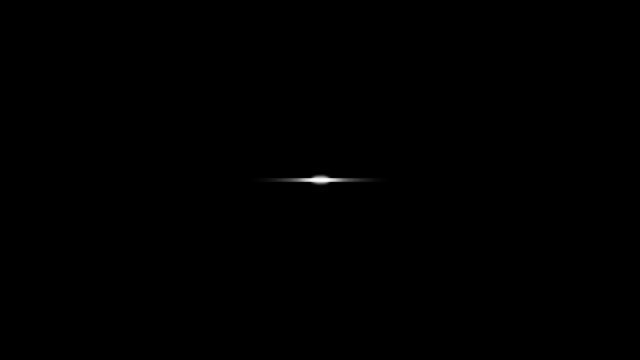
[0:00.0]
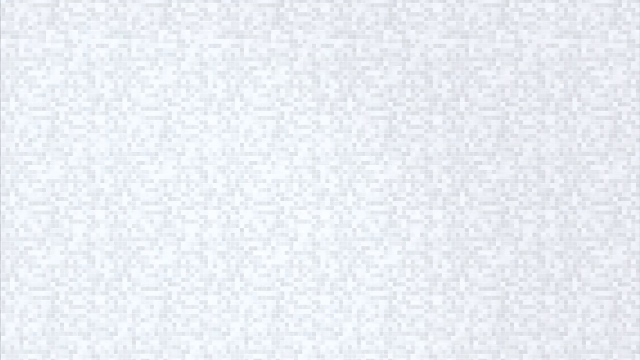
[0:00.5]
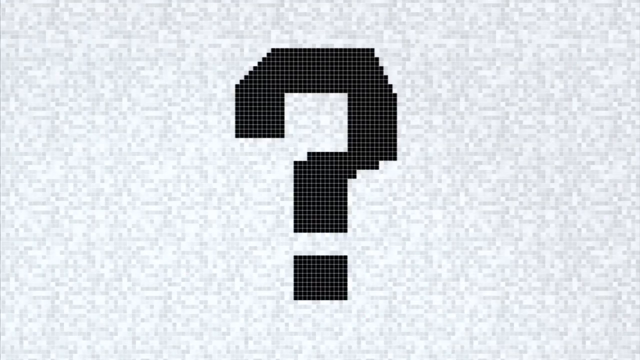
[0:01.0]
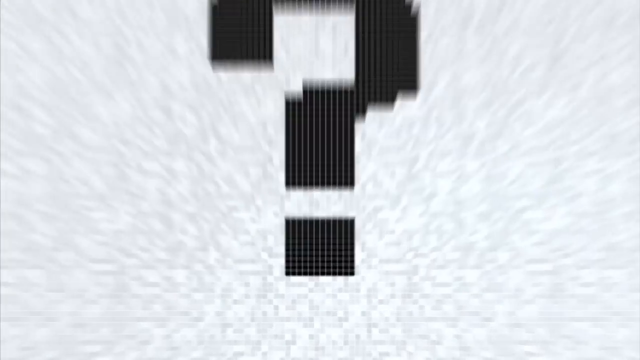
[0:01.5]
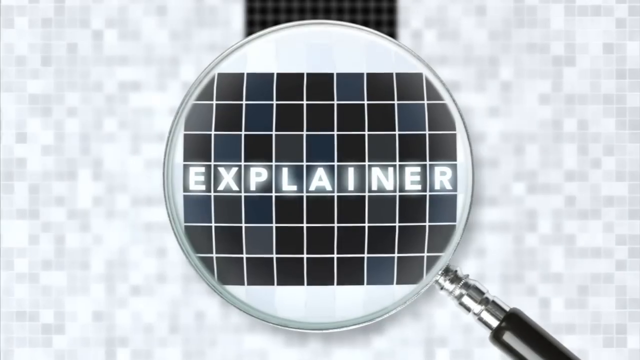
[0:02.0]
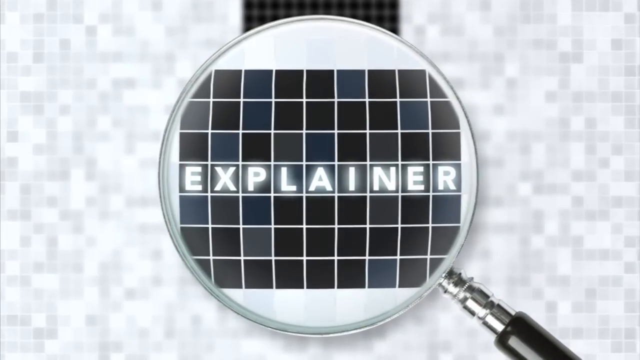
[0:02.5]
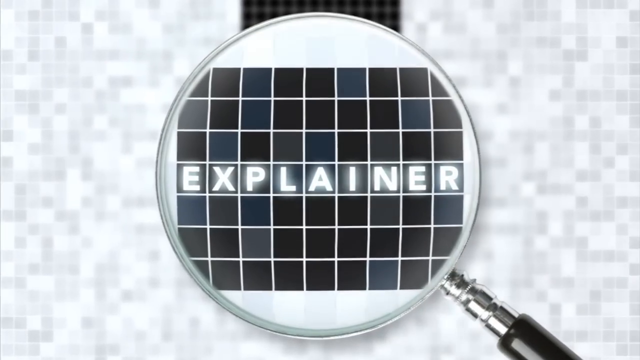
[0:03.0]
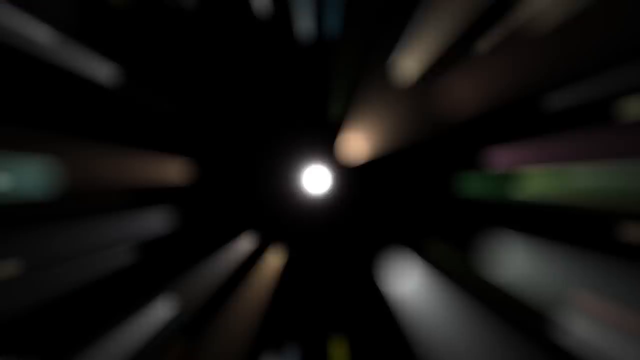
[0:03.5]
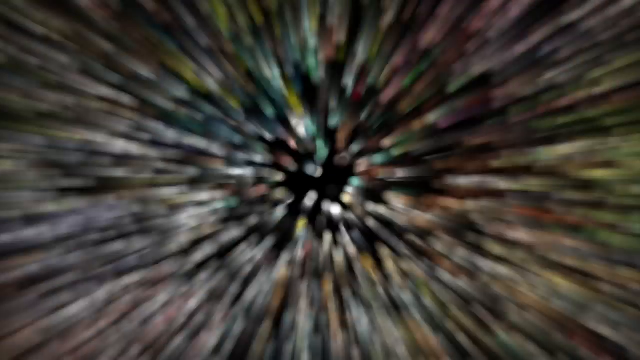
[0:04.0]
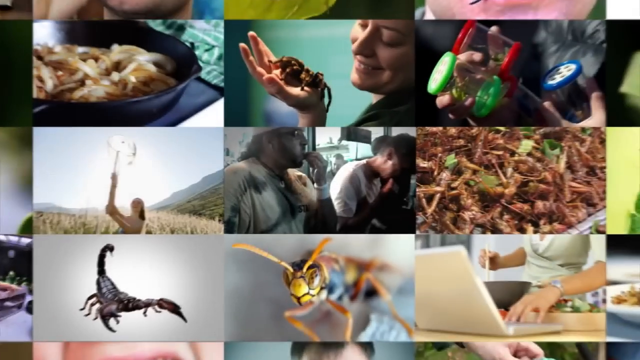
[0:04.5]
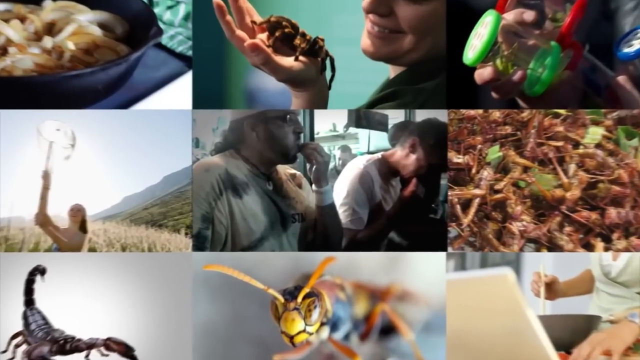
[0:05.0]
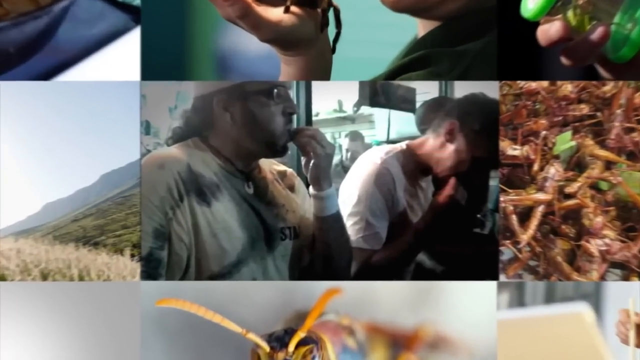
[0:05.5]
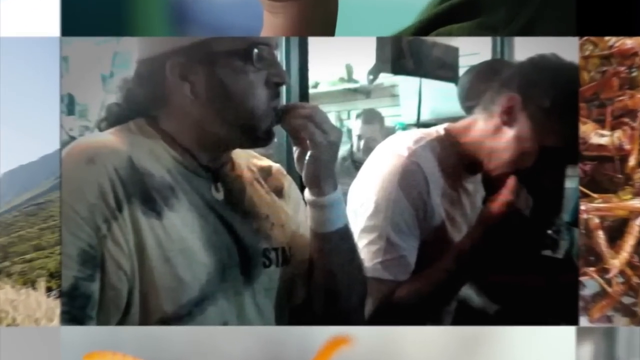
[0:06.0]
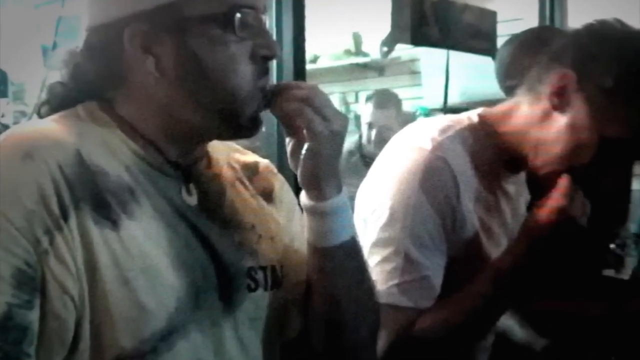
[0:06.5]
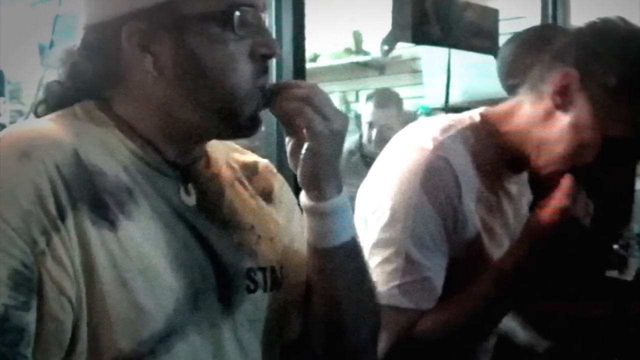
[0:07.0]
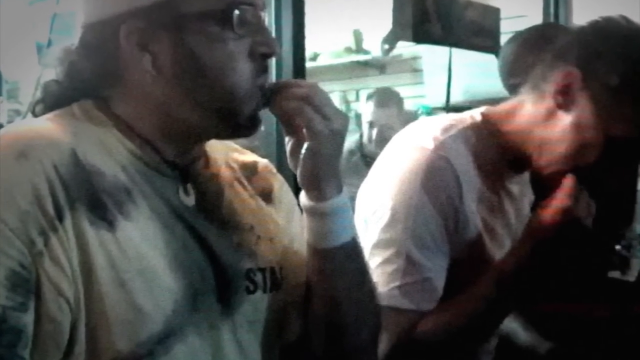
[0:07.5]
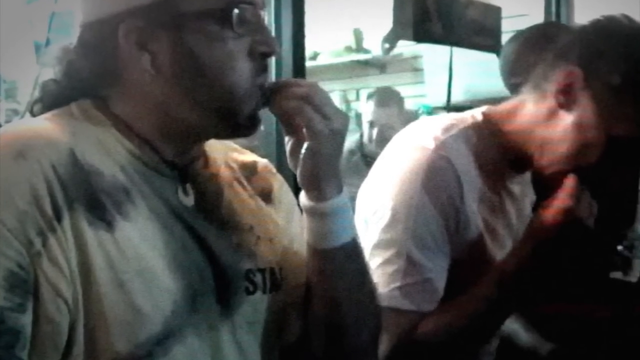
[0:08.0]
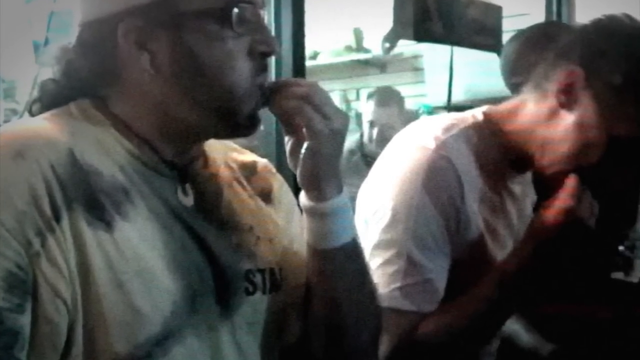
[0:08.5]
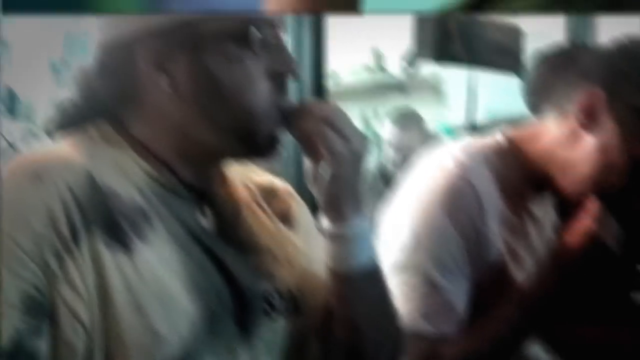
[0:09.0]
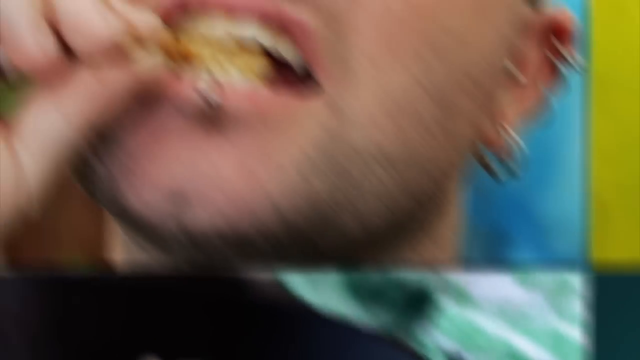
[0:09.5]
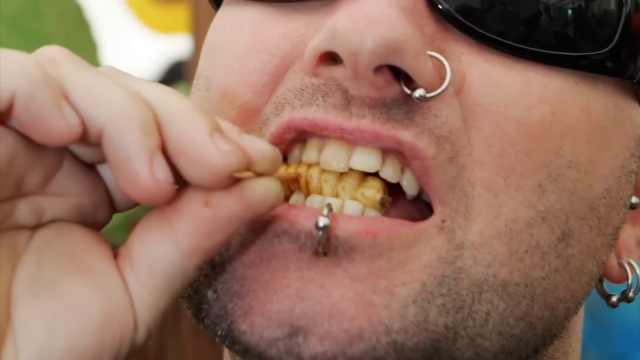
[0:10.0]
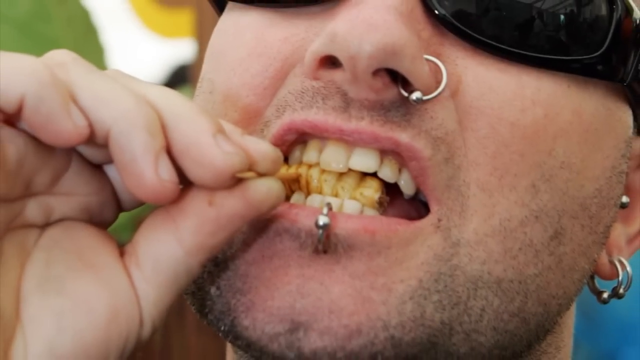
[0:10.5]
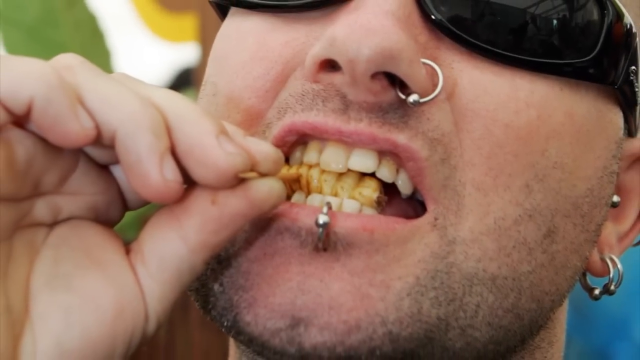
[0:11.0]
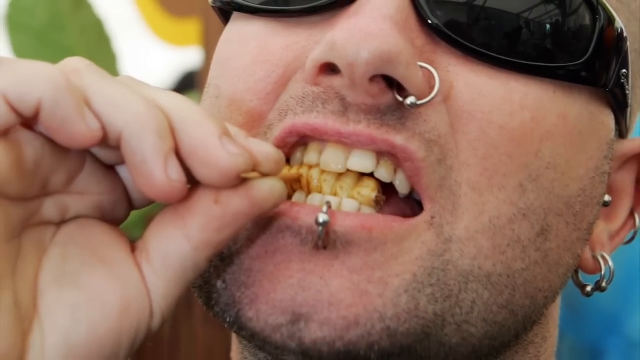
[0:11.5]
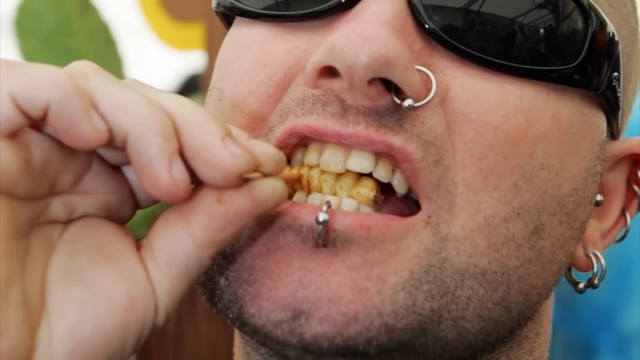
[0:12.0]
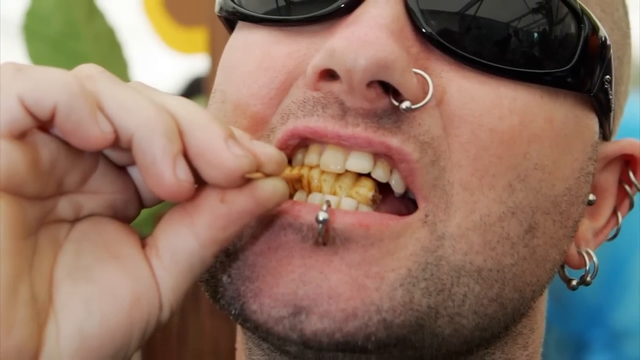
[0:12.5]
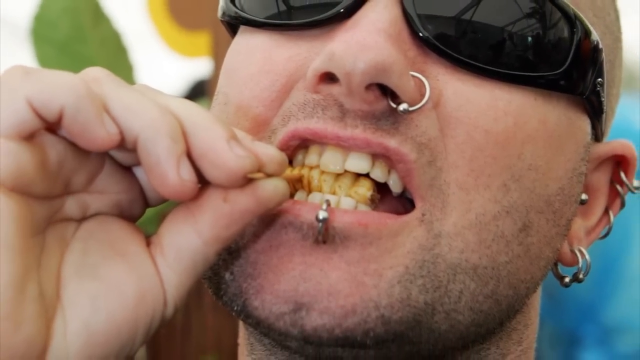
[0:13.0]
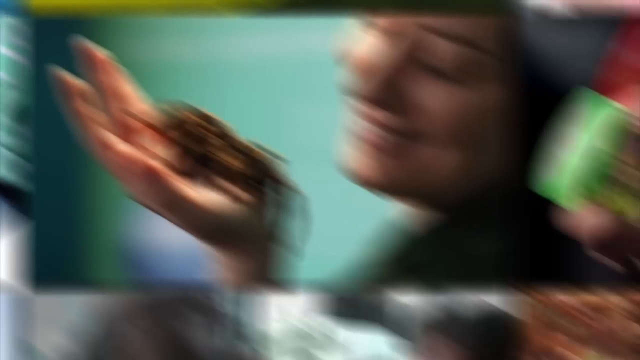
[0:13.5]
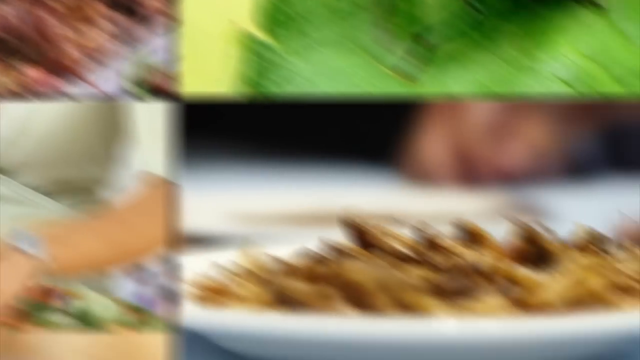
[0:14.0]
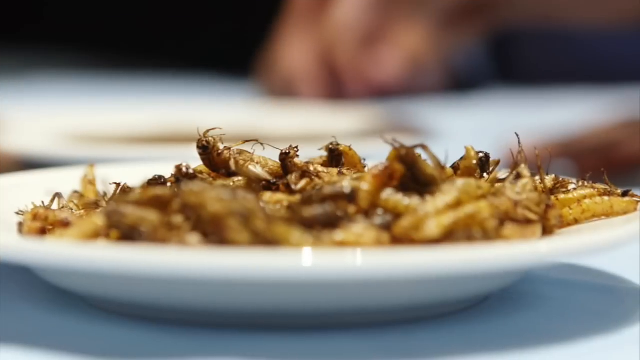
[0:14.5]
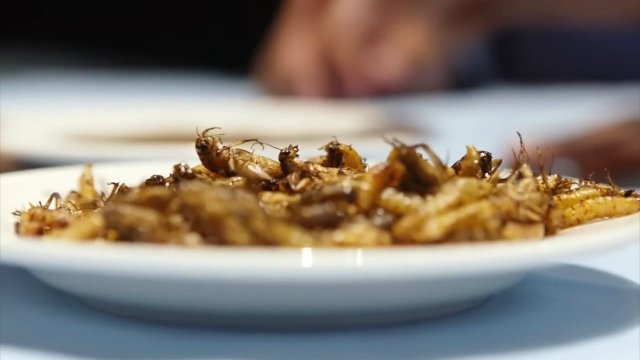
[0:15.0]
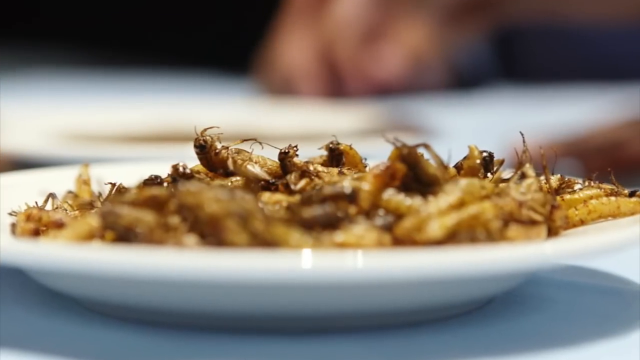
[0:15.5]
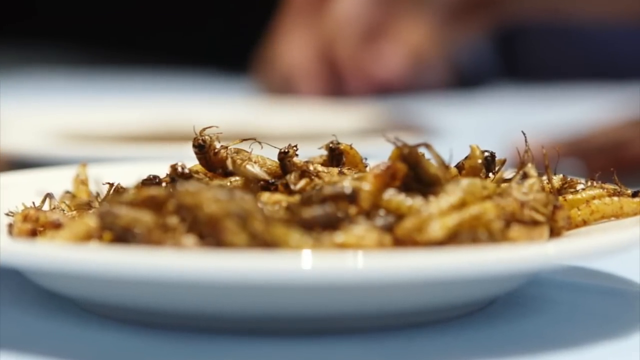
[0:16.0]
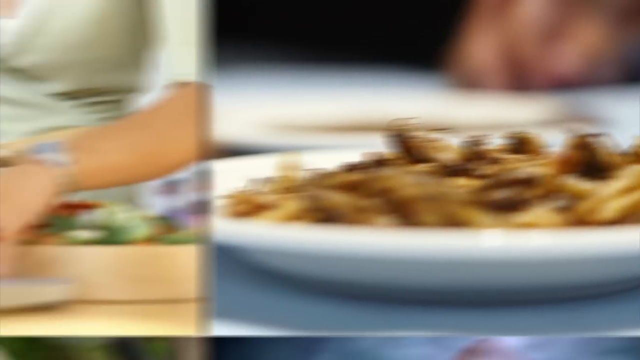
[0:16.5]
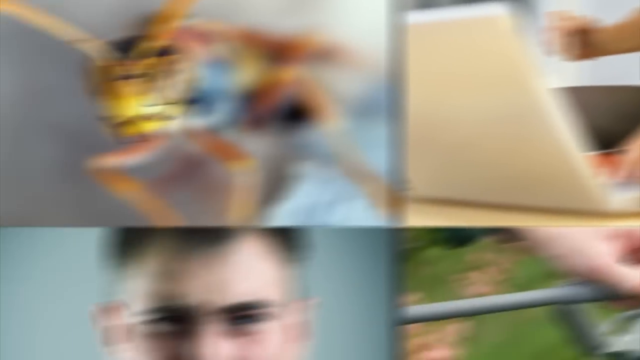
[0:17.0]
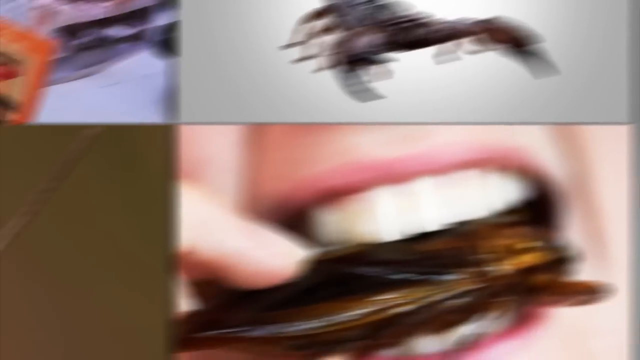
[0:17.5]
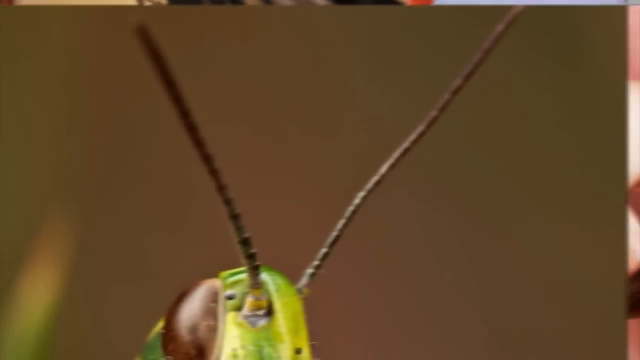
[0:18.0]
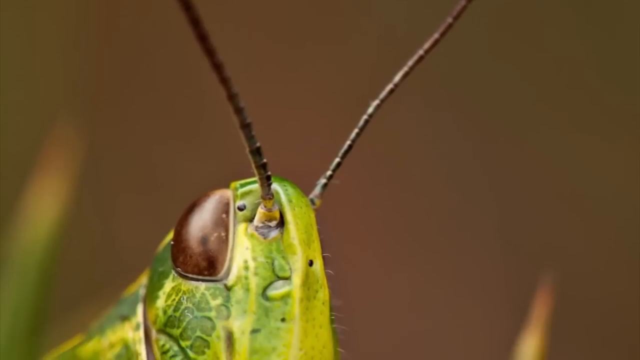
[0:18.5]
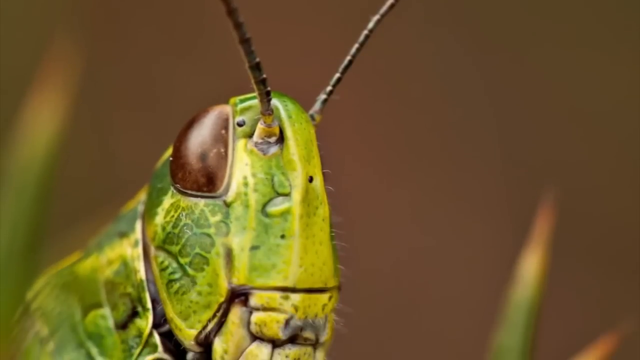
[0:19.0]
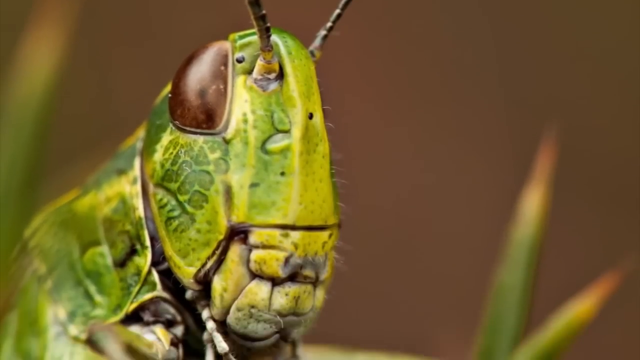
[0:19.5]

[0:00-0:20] The video opens on a black screen that appears to be a TV being switched on, followed by static like on old TVs. A black, pixelated question mark appears, the view zooms in, and a magnifying glass comes on screen with the text "explainer". The view zooms in again, moving through many little dots into a collection of different pictures: a girl with a tarantula in her hand, some ants, a wasp and a scorpion. The view zooms in on a picture of two guys with their hands in their mouths, apparently eating. Another picture shows a man who seems to be eating something, possibly larvae. Next is a plate of grasshoppers or locusts that look dead and are fried, and then a picture of a very green grasshopper.